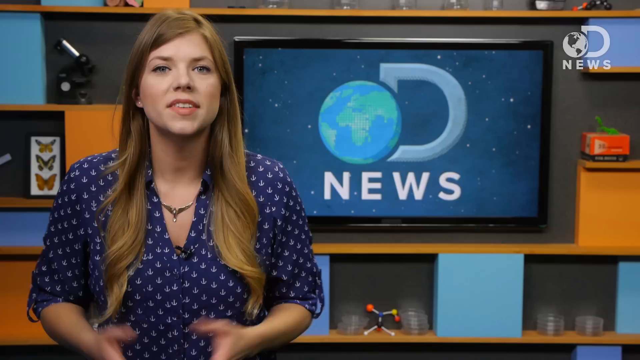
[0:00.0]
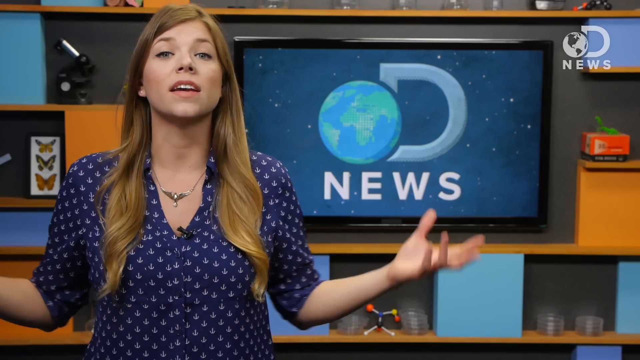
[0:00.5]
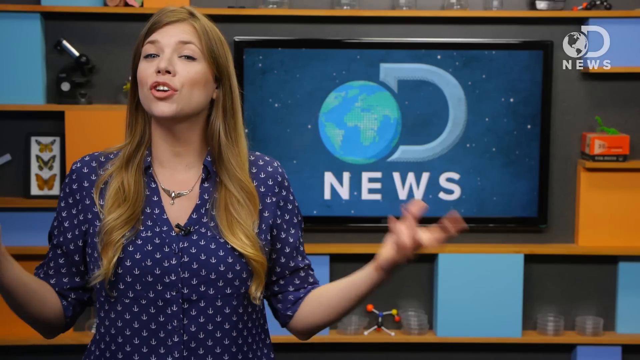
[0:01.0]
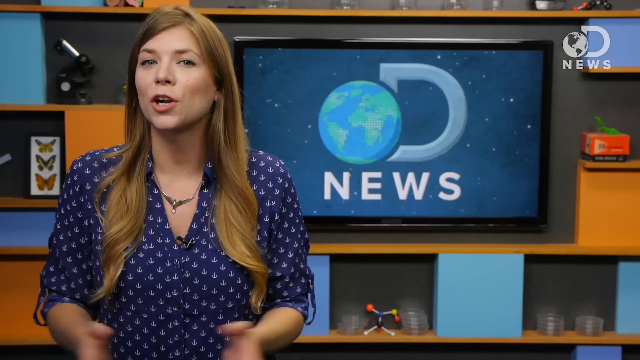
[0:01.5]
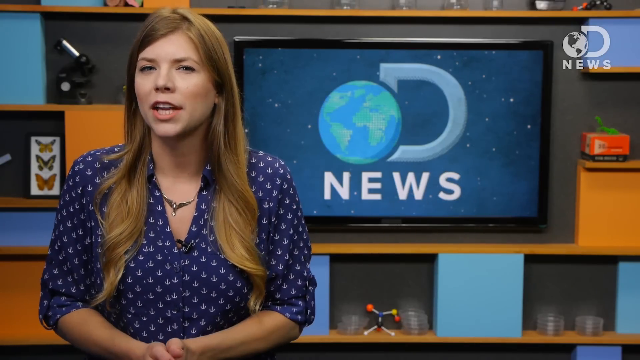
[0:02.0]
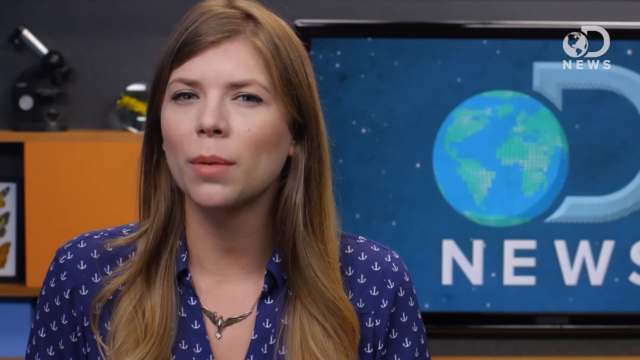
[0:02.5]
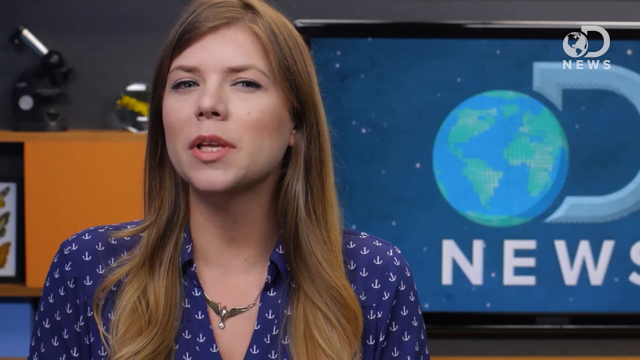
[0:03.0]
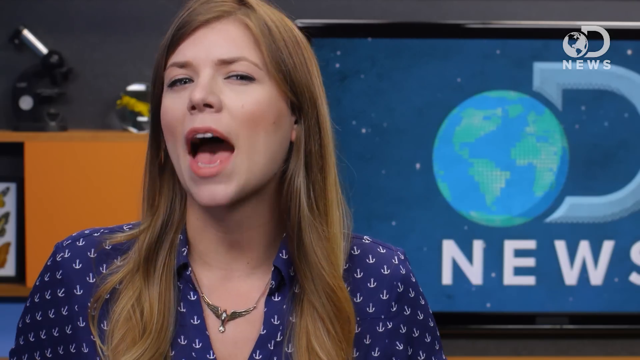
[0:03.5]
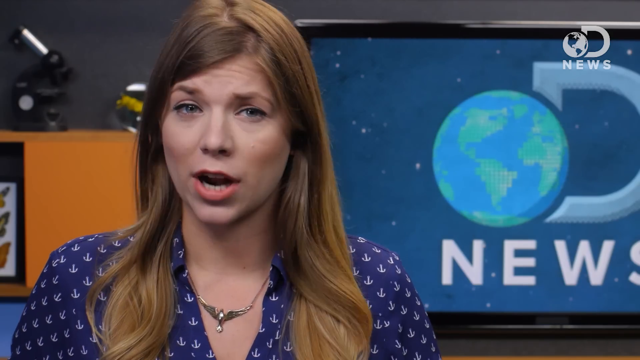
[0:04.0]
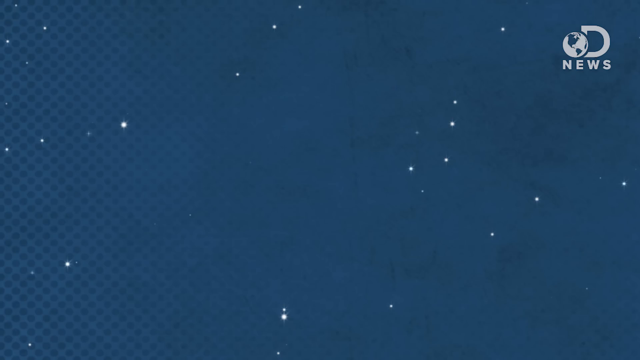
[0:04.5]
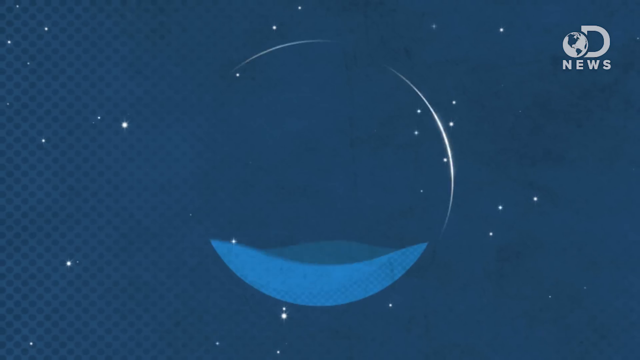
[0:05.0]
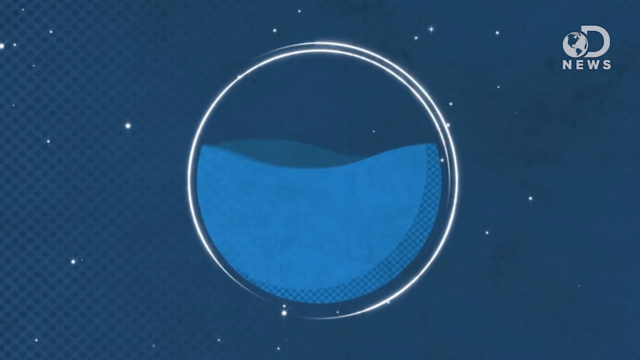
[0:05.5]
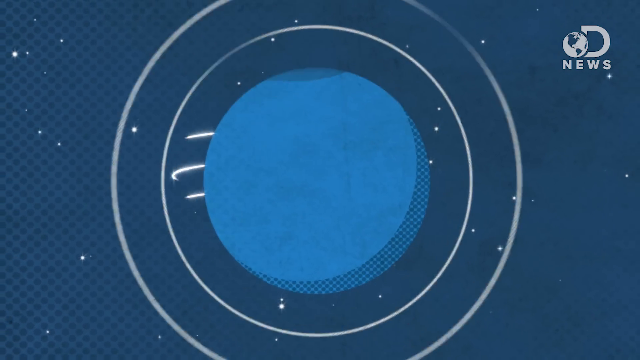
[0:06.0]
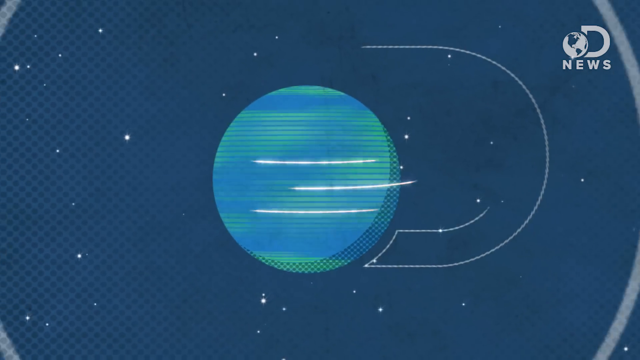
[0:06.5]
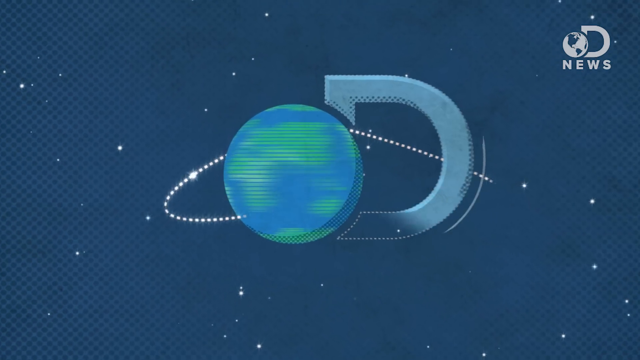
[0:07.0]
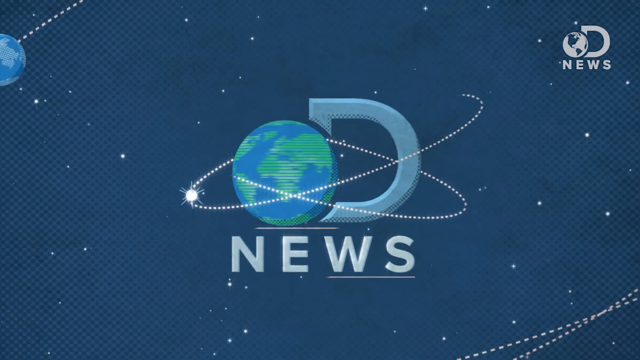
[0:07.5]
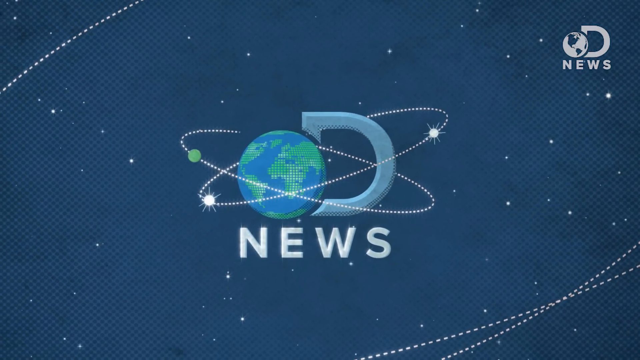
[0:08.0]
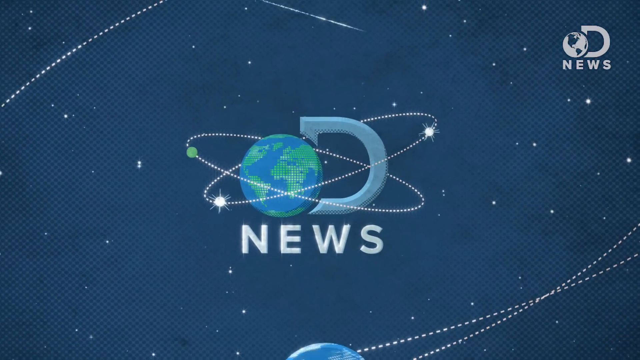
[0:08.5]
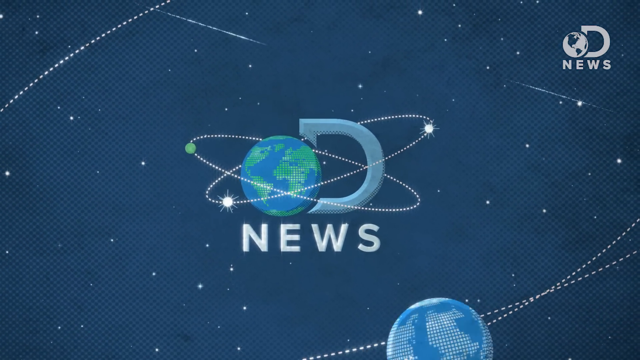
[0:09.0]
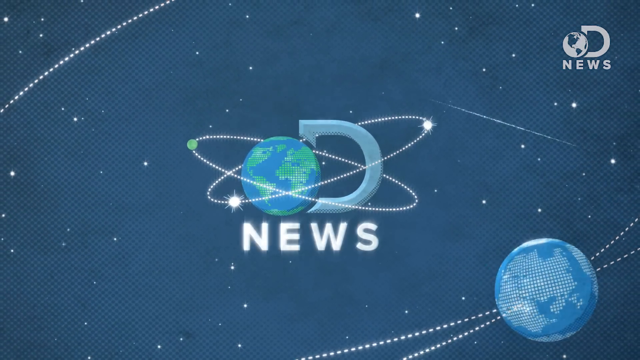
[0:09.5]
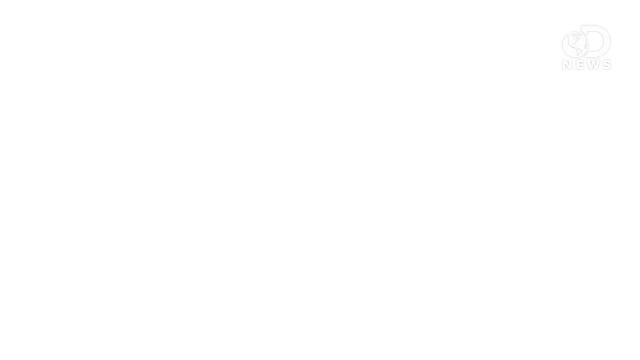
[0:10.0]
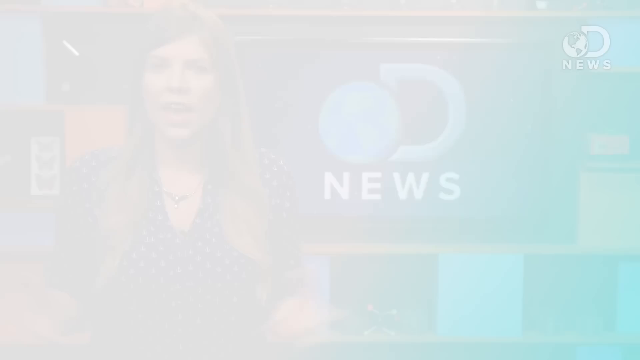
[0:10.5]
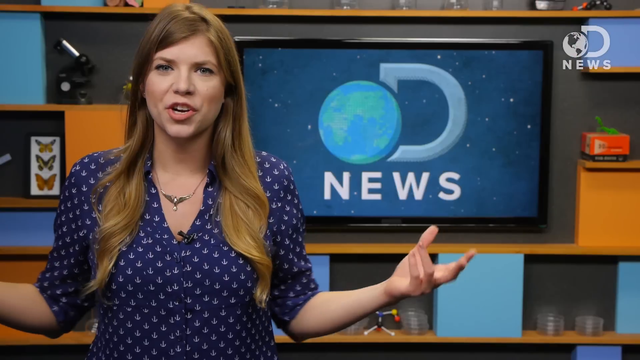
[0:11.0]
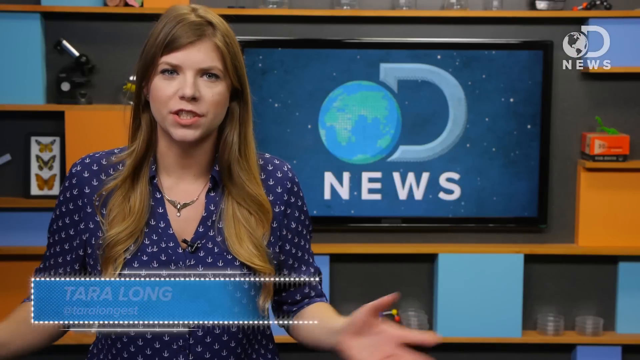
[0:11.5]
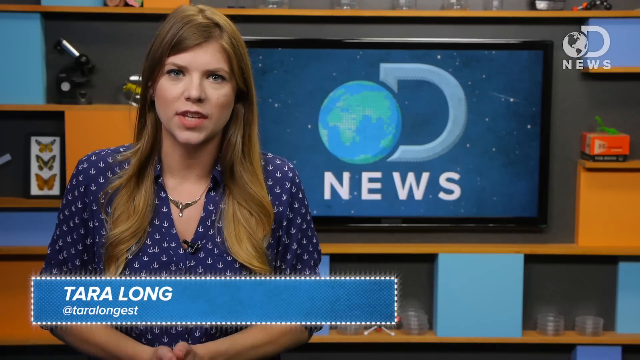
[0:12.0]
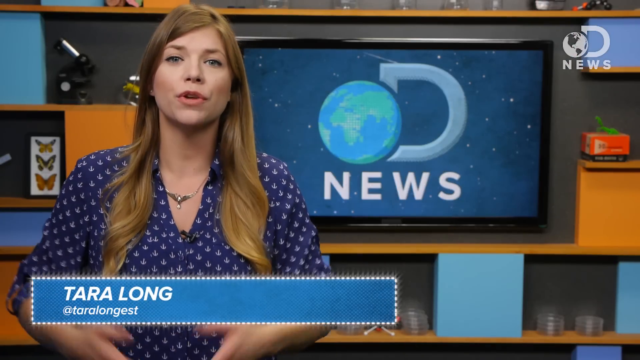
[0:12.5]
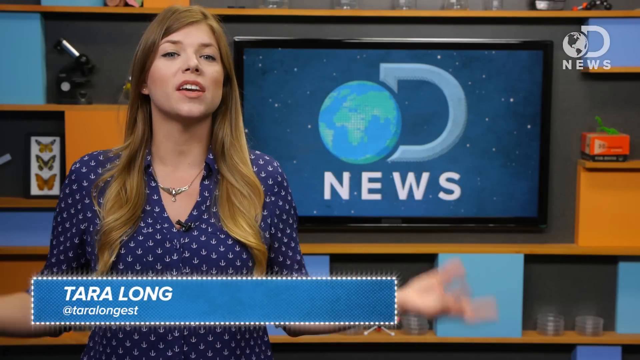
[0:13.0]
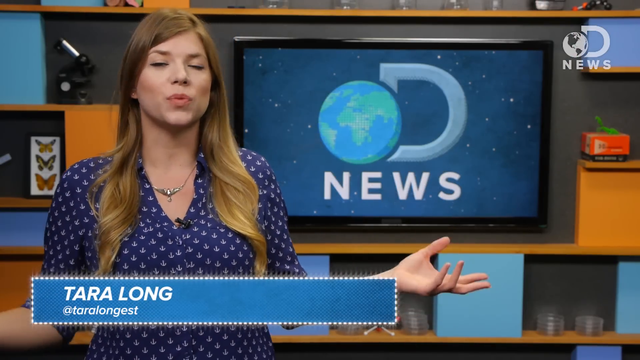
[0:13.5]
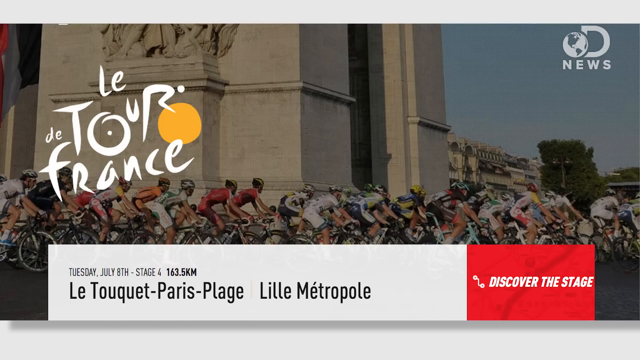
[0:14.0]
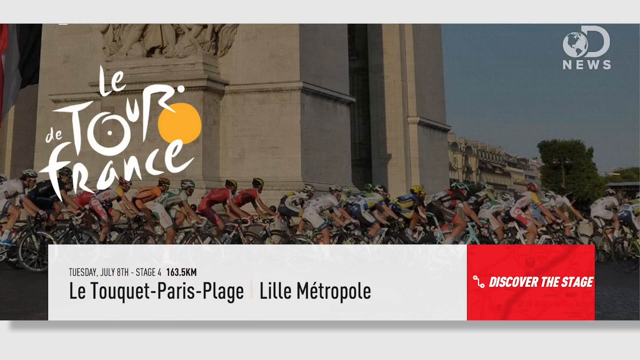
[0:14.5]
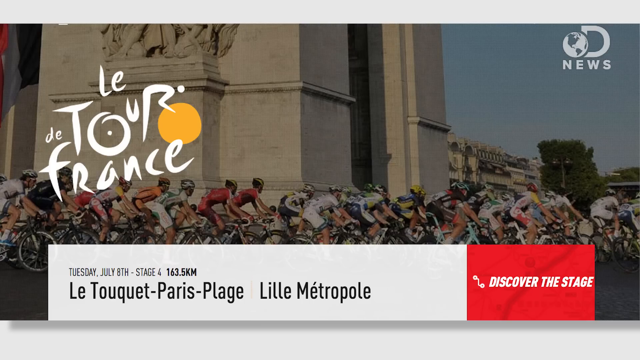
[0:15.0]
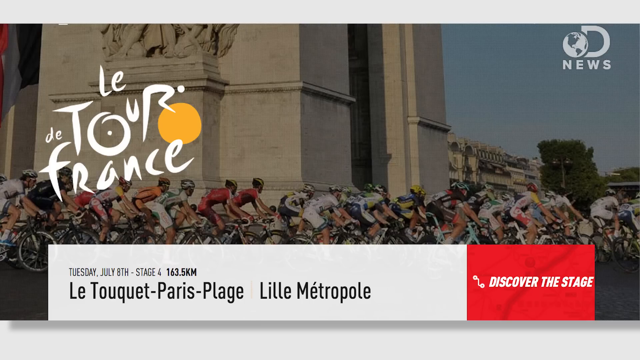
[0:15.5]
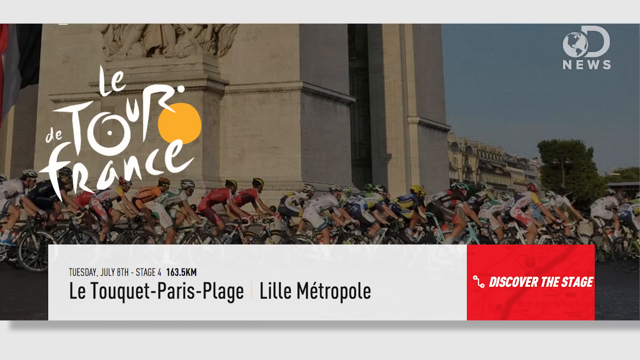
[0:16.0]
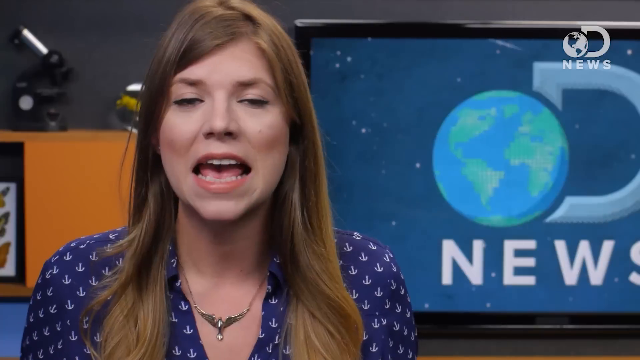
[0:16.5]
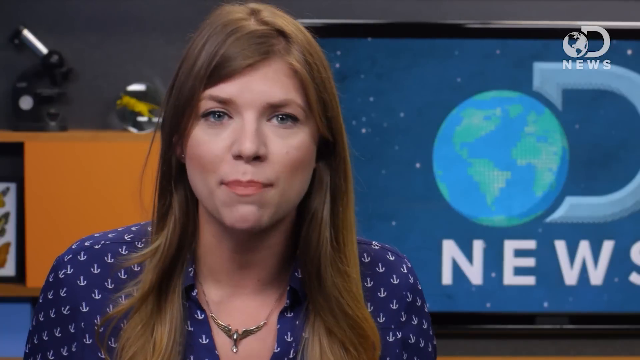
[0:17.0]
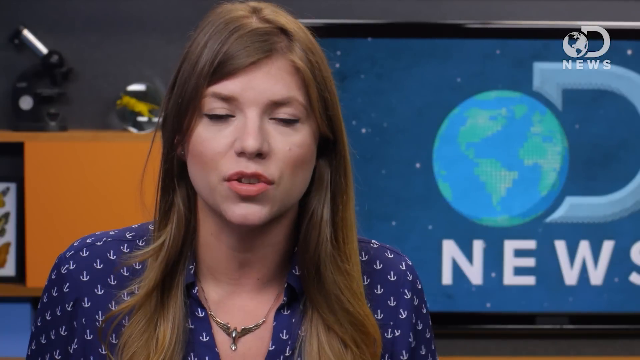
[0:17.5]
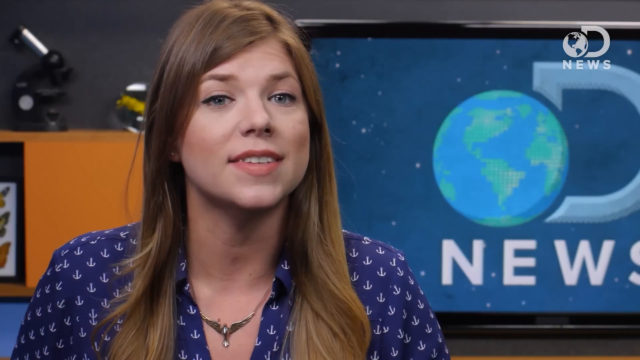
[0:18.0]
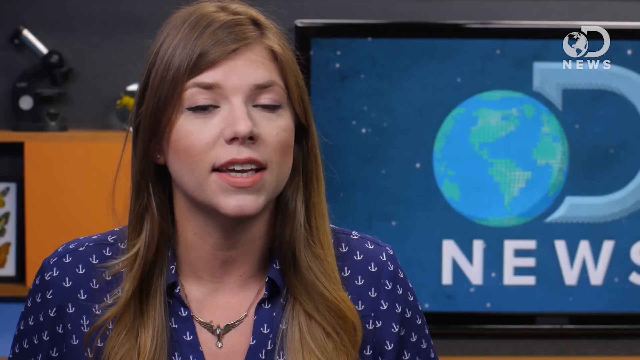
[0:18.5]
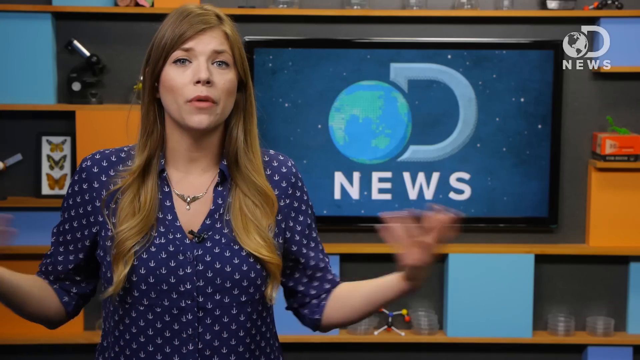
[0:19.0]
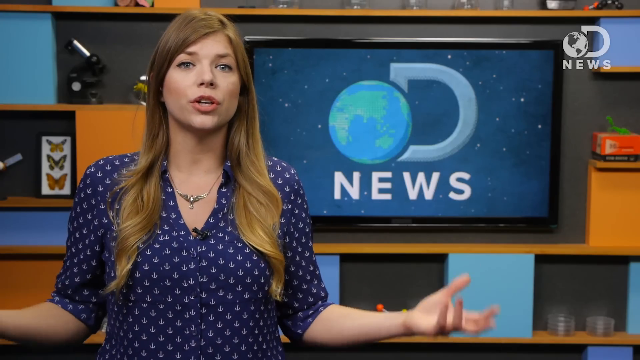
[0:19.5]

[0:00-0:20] A butterfly appears, along with some kind of monitor showing Discovery: an Earth icon, a "D" and "News". A woman talks. Animations follow of arcs, different kinds of rings, a sphere, some kind of suns and an atom icon. Text reads "Tuesday July 8 stage 4 163.5 kilometers" and "discover the stage", while the woman talks and waves her hands around. The news program shows infographics and animations; the main news appears to be the Tour de France, with multiple bikes shown along with a famous French landmark.